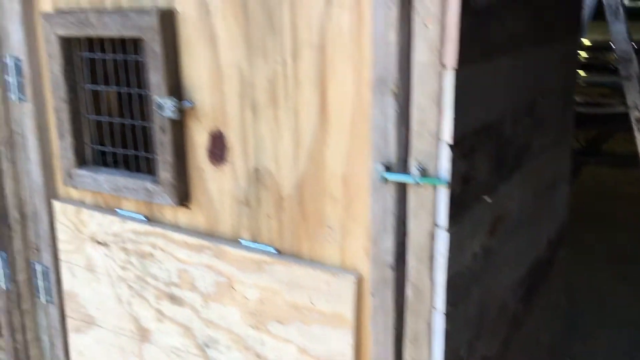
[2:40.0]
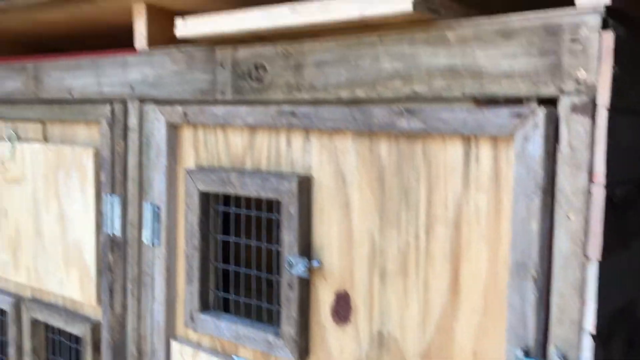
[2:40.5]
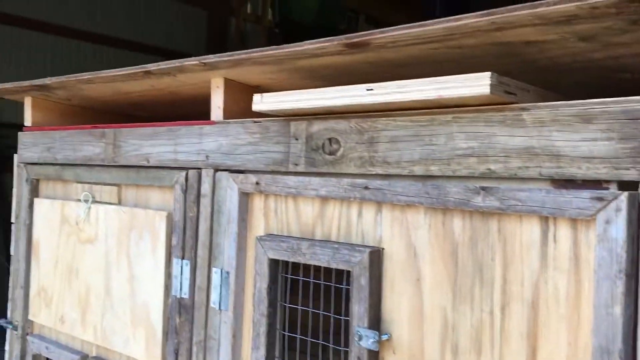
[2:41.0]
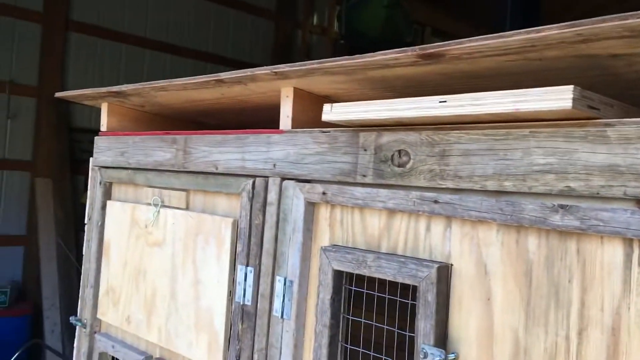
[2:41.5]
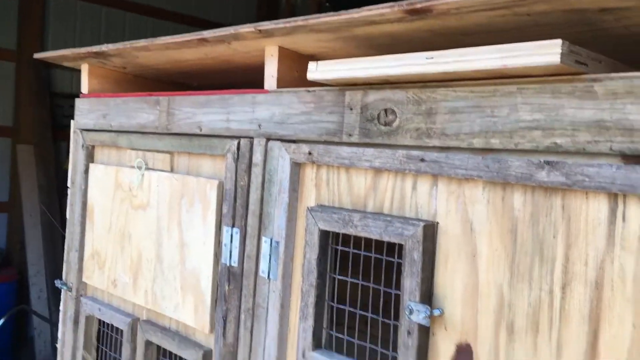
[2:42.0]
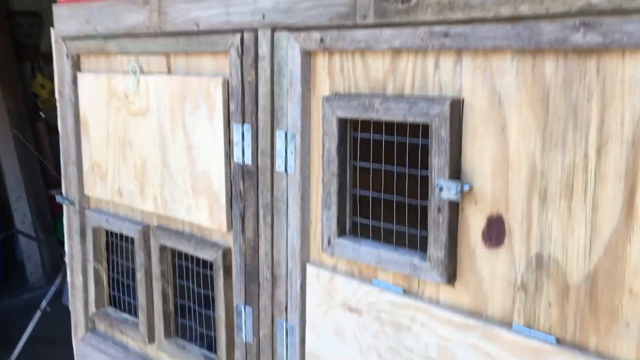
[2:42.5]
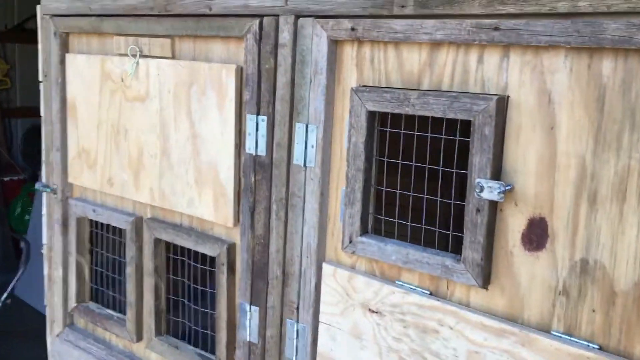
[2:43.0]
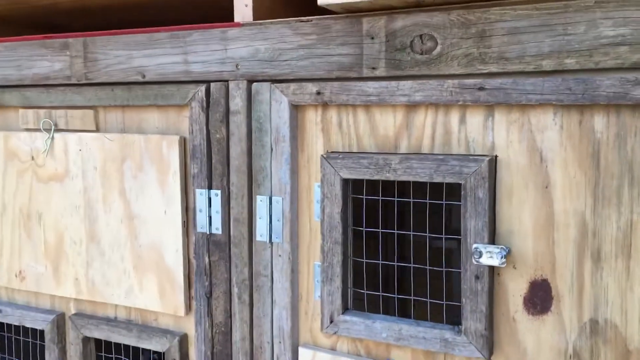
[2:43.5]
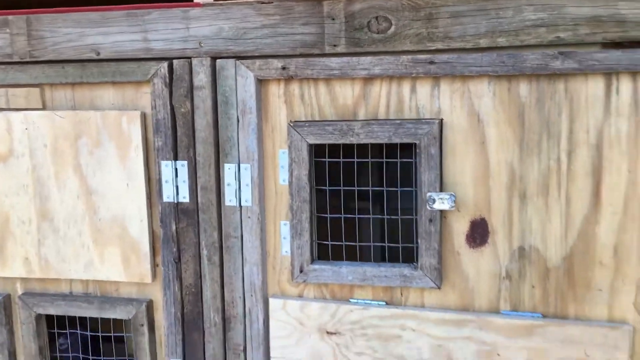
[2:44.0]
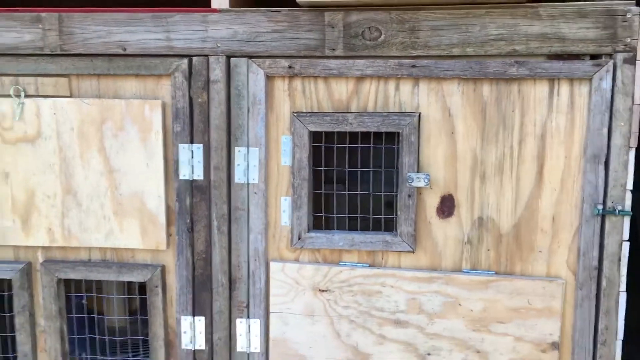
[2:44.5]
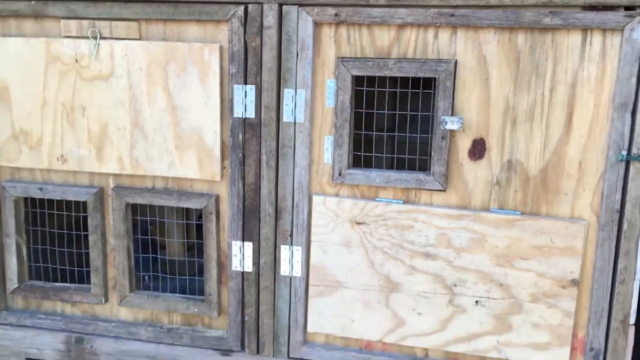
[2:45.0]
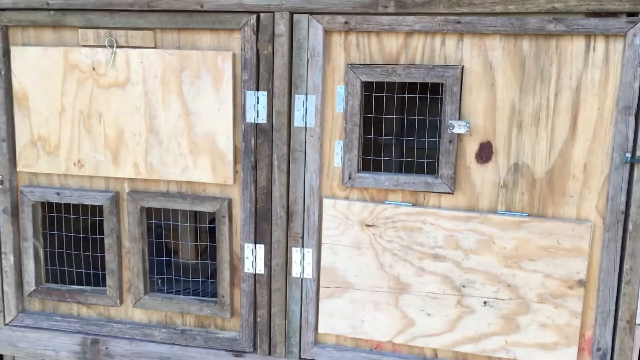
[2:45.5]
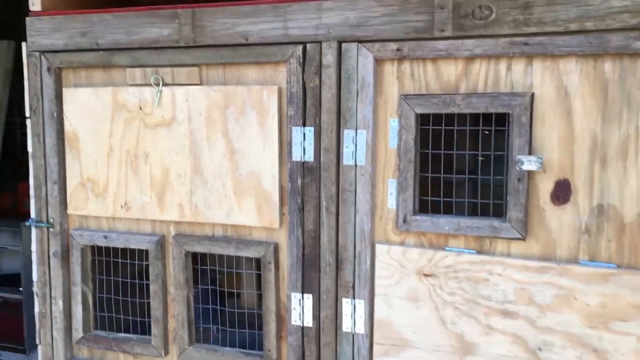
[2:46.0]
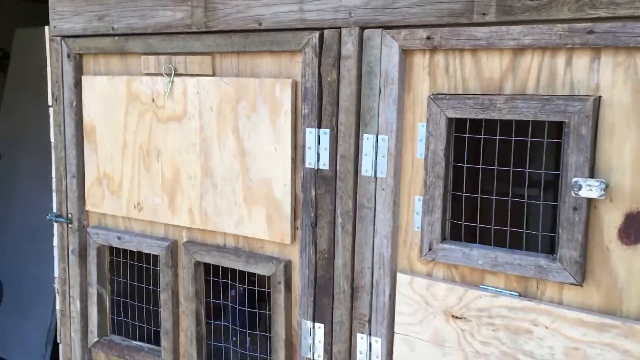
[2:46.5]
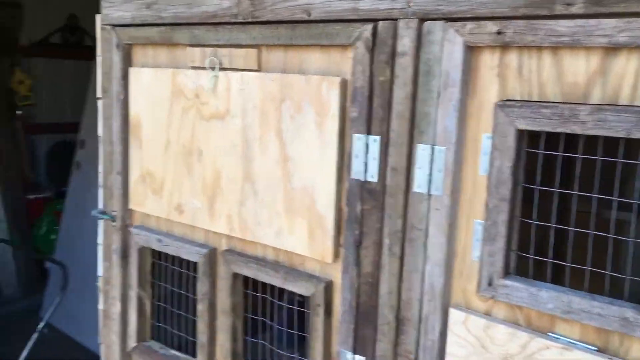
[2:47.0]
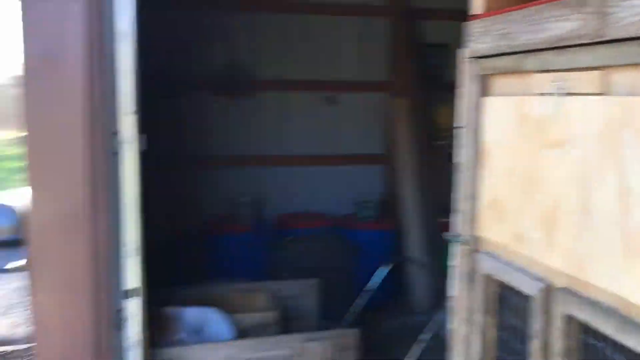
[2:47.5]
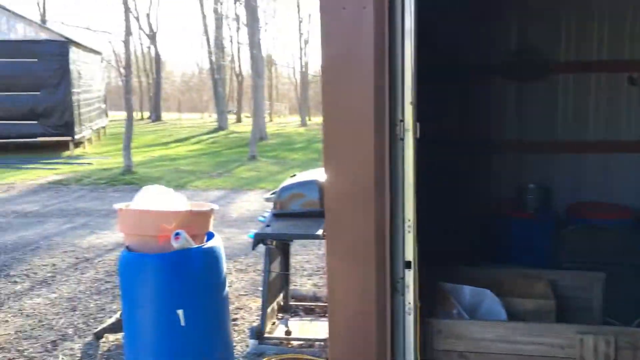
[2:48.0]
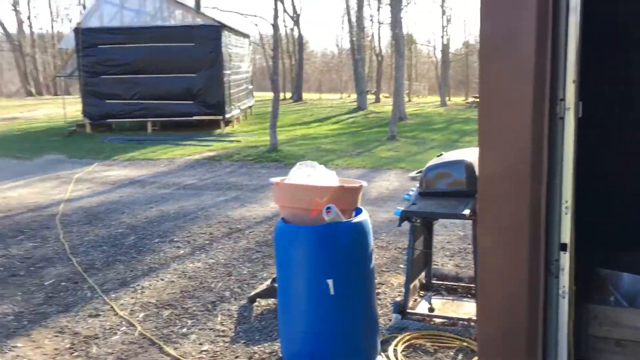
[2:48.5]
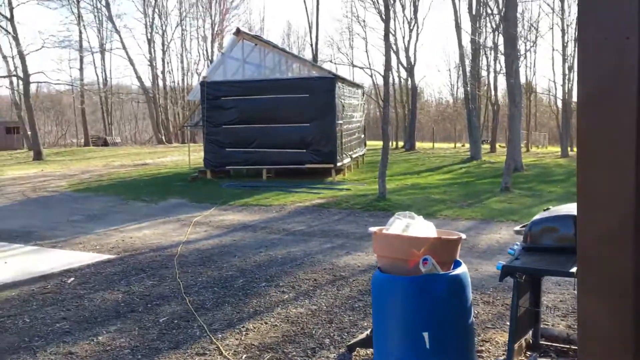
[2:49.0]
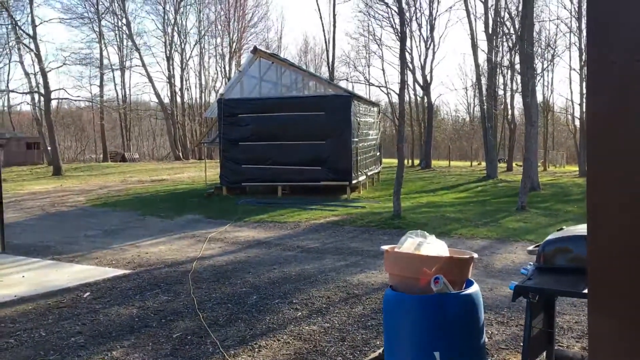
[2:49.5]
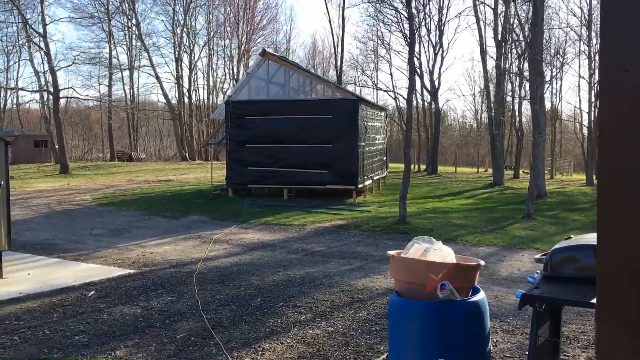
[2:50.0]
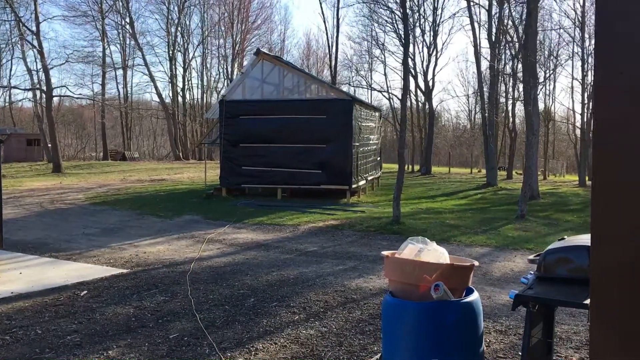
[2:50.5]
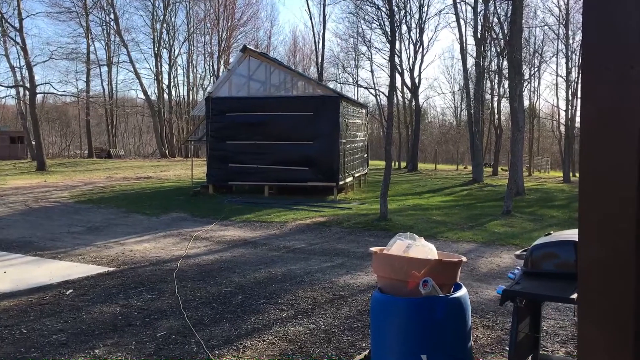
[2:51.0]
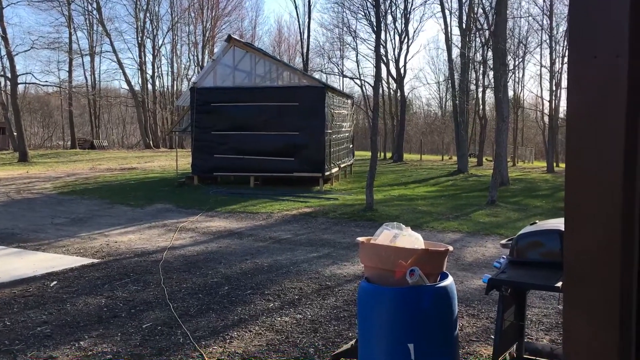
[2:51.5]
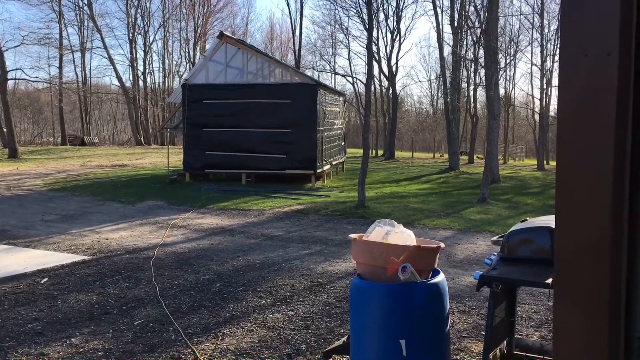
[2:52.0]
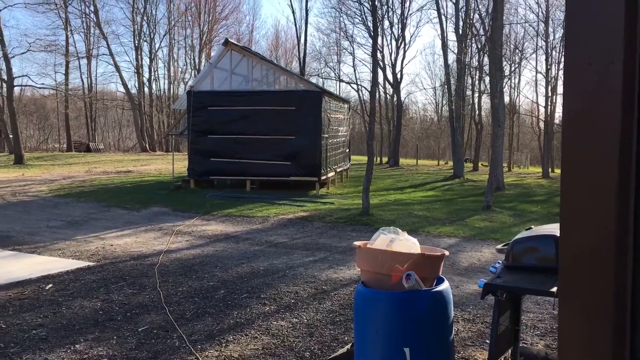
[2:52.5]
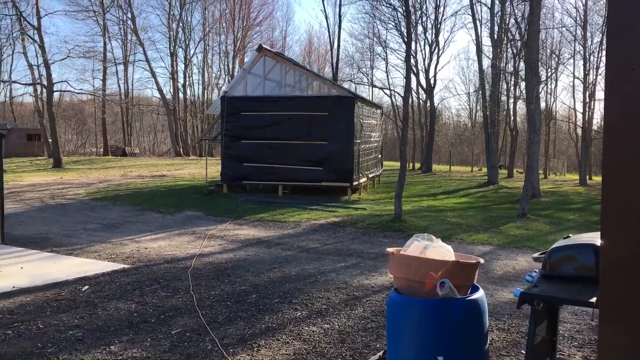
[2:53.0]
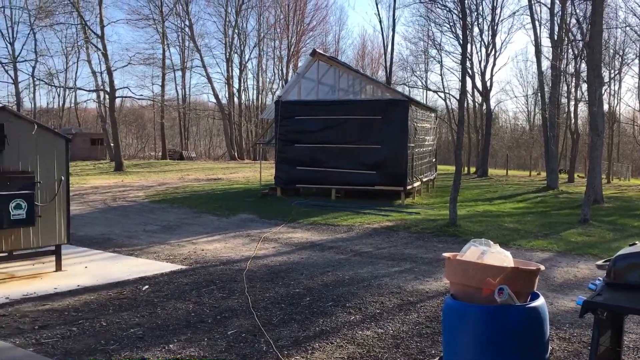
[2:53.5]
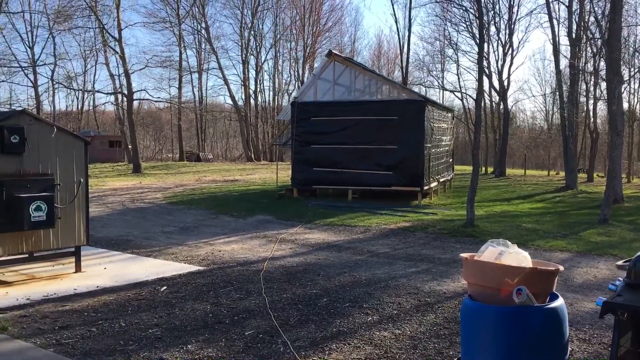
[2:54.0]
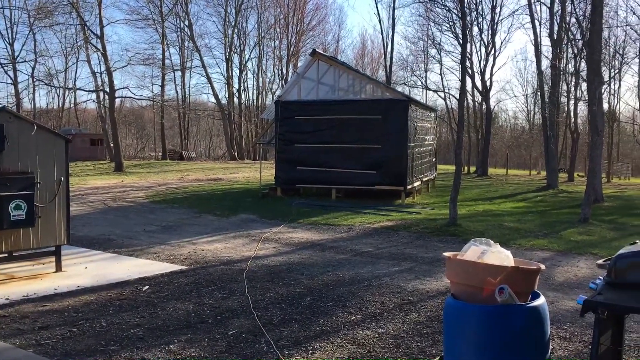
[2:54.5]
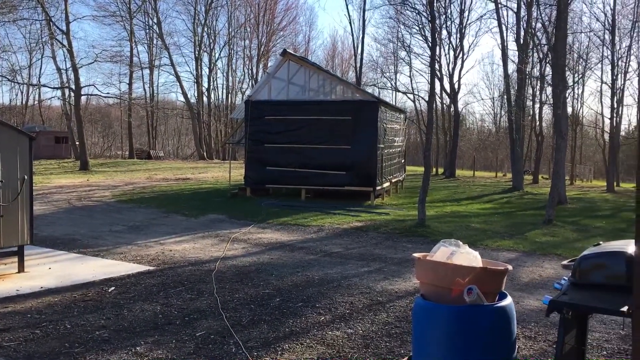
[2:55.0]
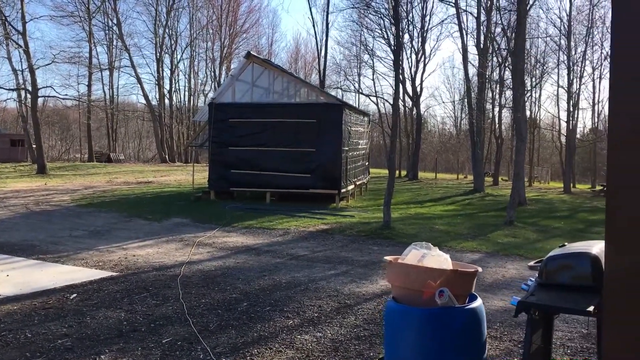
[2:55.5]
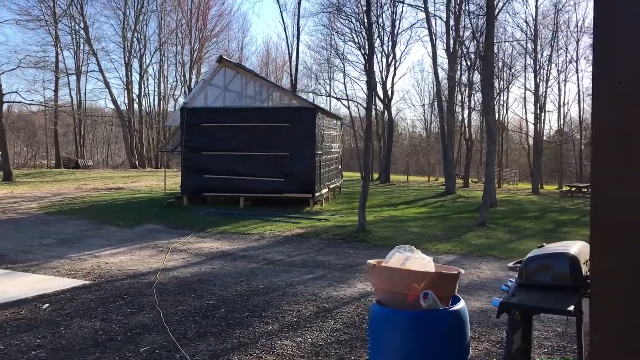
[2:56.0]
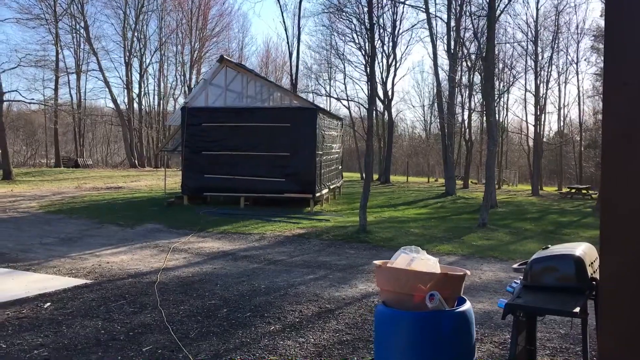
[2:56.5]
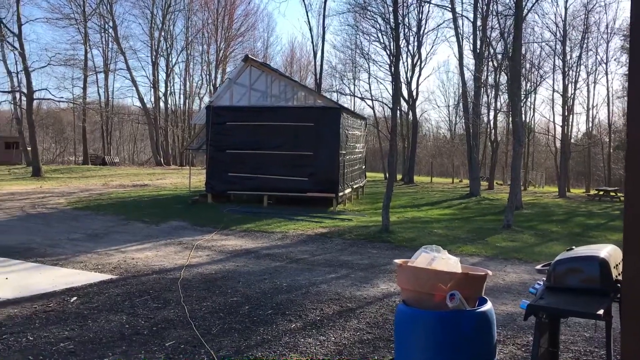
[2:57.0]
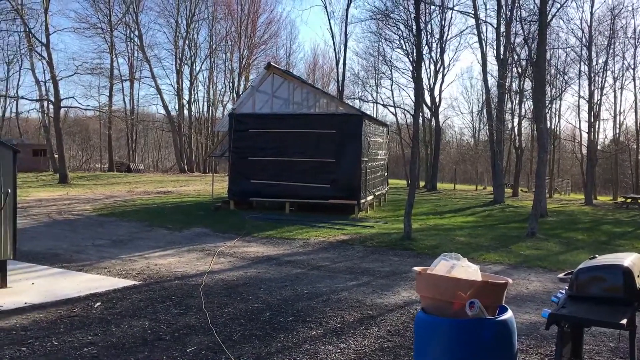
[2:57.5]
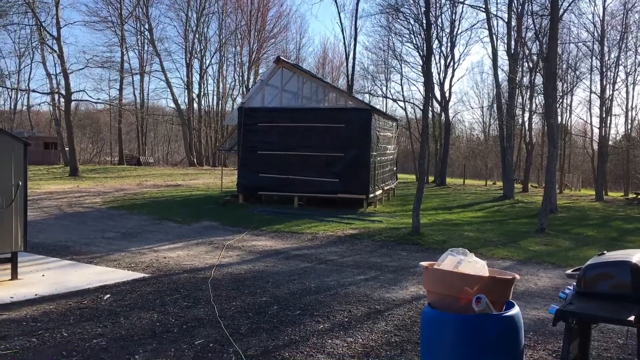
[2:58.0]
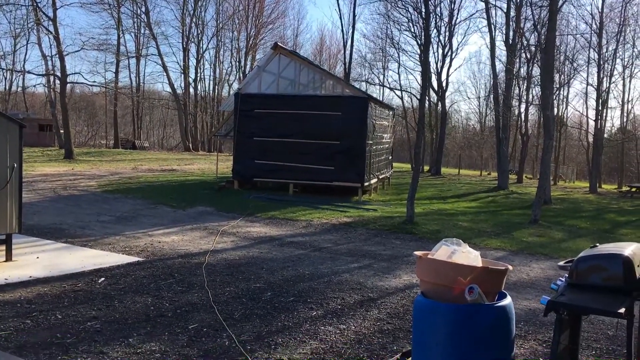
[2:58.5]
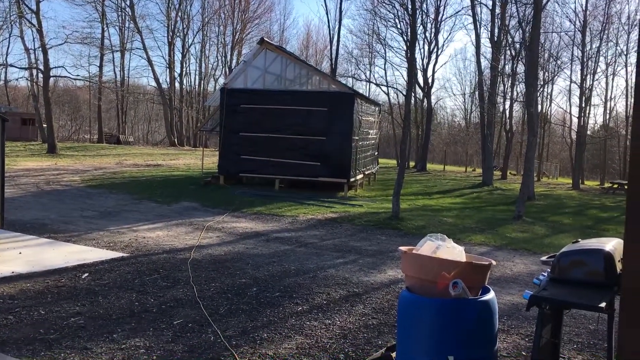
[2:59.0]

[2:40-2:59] The windows on the pigeon coop are boxed in with wood and have chicken wire on the inside of them. The man backs out to show a full view of the pigeon coop, and the view pans out to the yard, where there are more coops: one really big one and some smaller ones. There is also a picnic table in the yard and a gravel driveway.